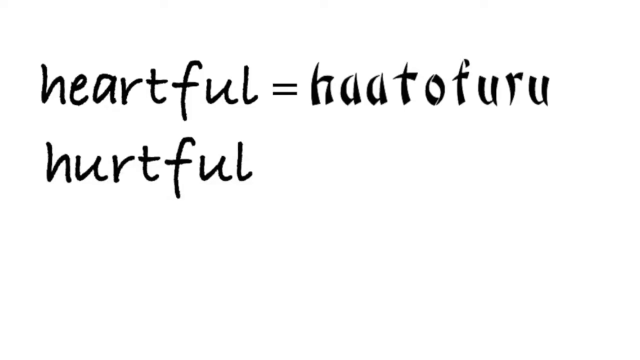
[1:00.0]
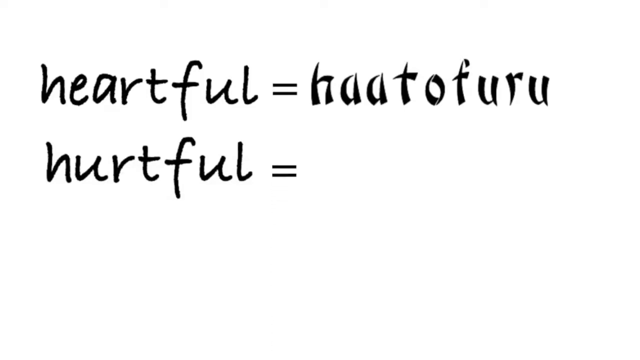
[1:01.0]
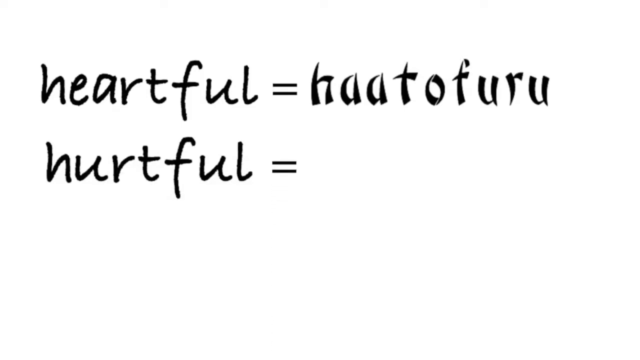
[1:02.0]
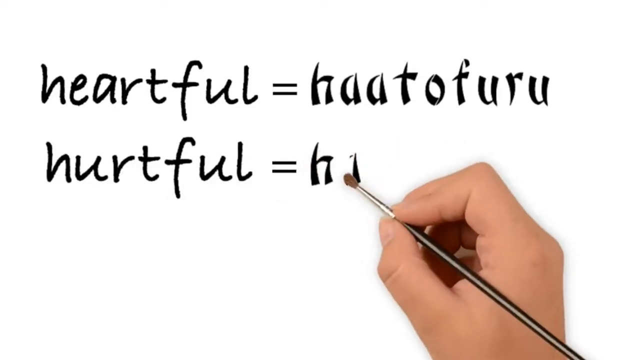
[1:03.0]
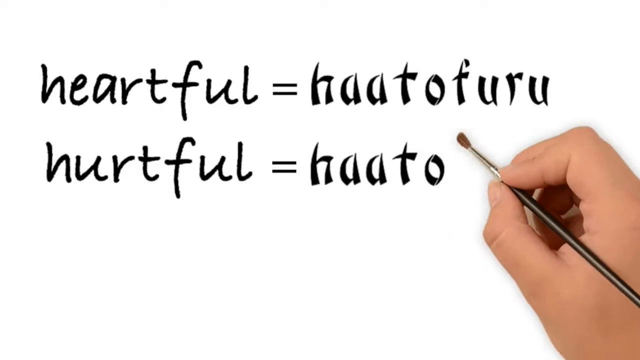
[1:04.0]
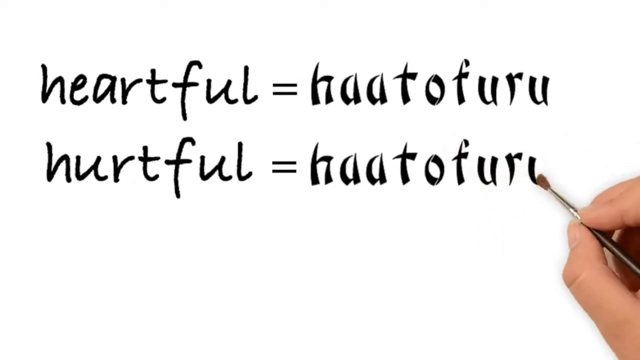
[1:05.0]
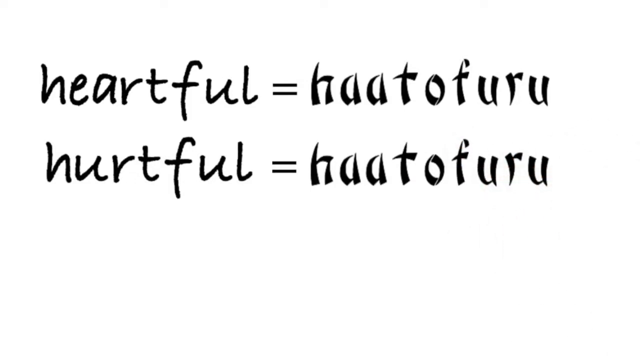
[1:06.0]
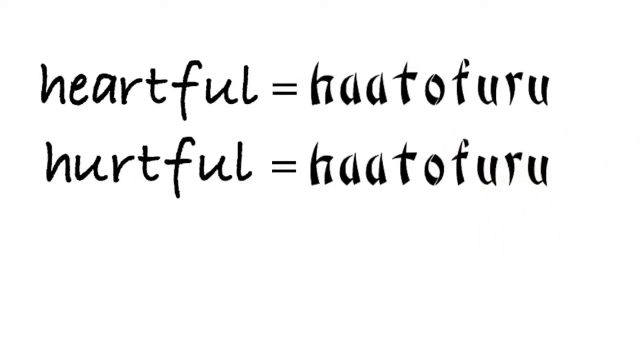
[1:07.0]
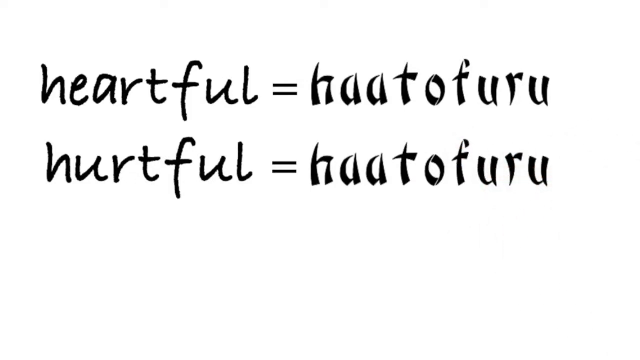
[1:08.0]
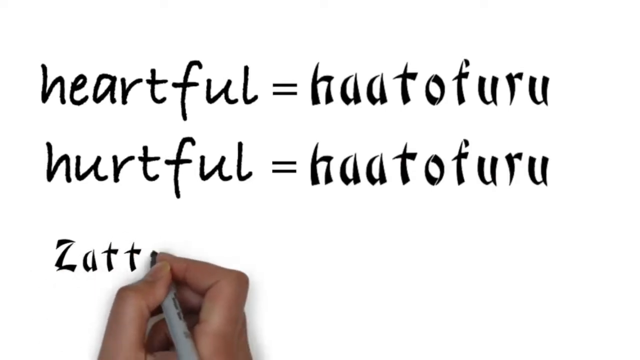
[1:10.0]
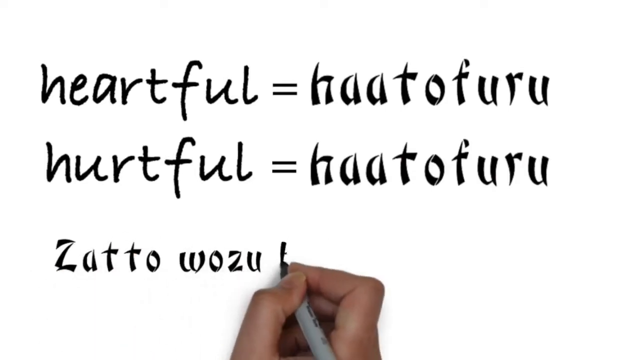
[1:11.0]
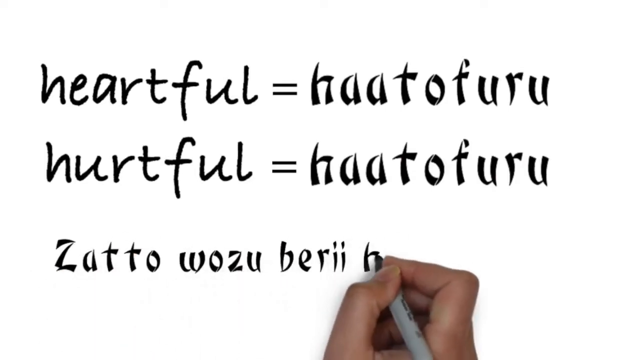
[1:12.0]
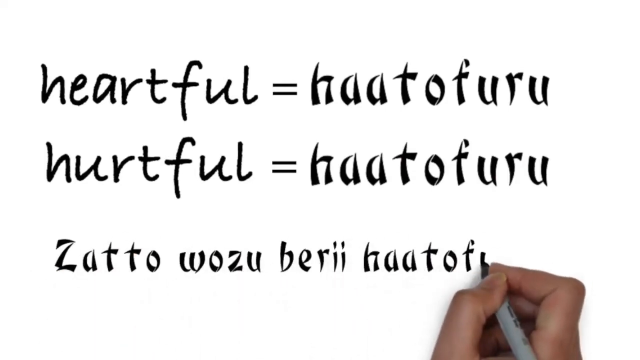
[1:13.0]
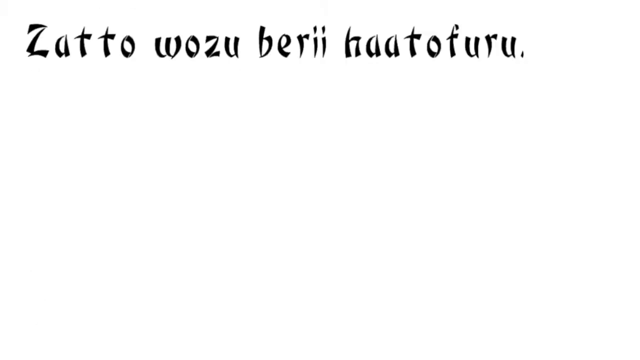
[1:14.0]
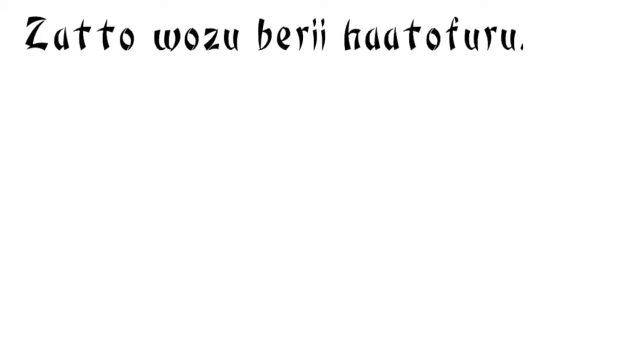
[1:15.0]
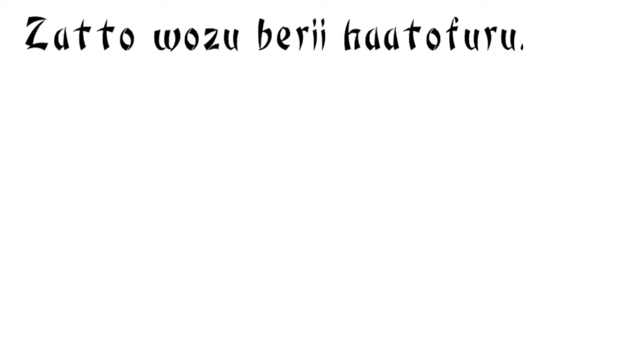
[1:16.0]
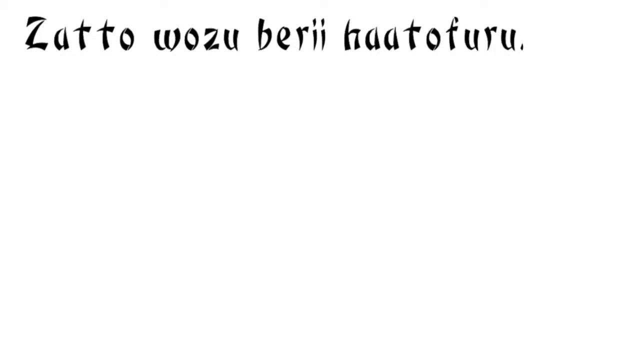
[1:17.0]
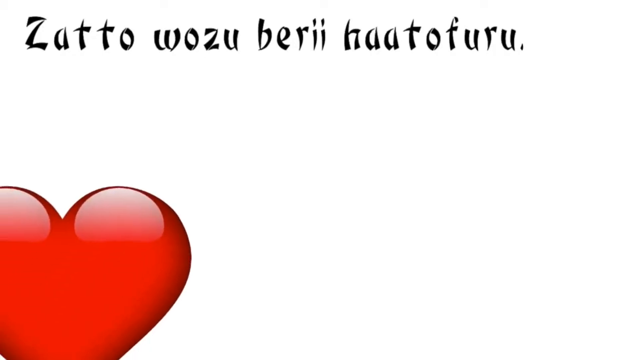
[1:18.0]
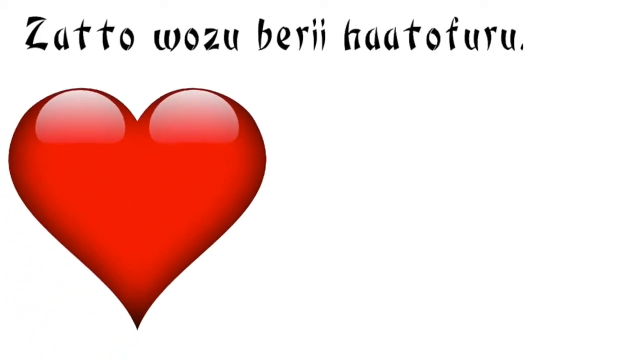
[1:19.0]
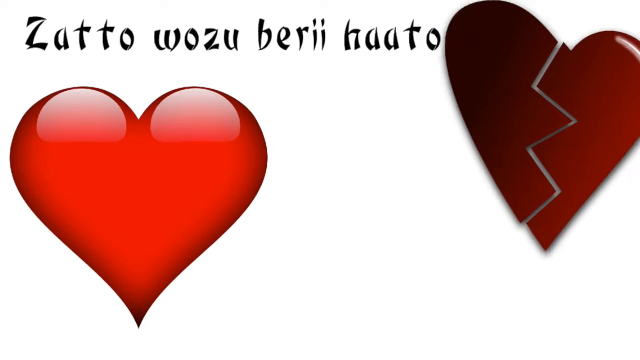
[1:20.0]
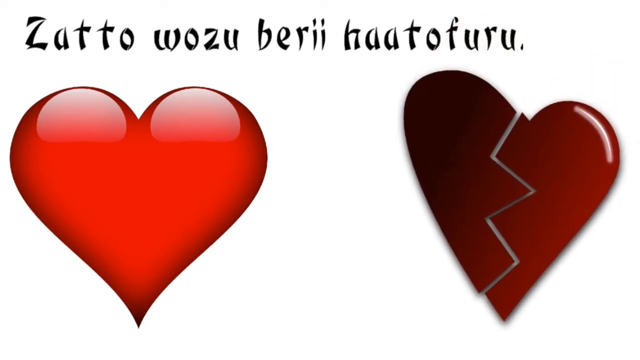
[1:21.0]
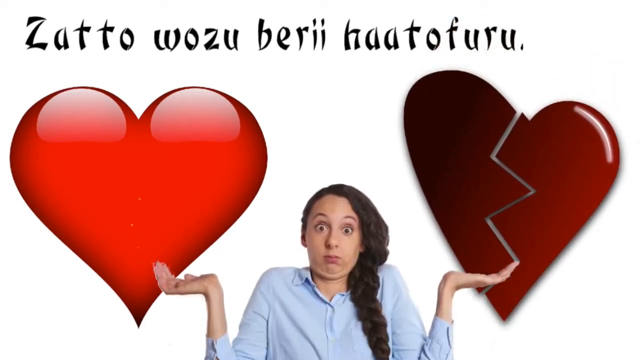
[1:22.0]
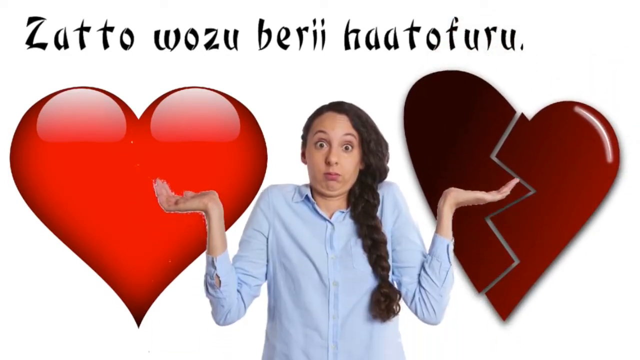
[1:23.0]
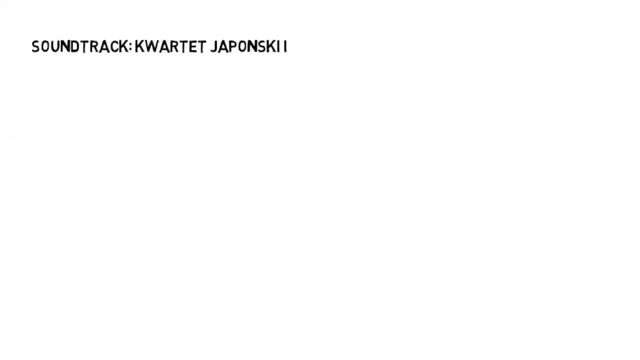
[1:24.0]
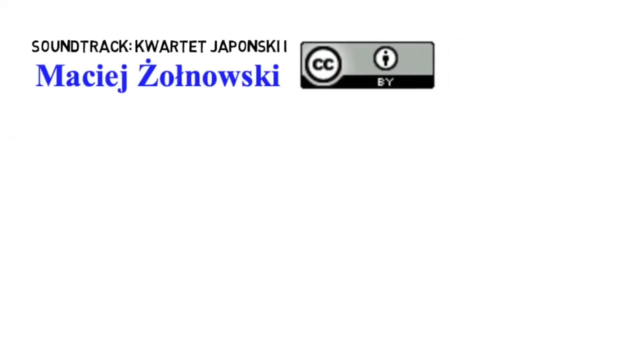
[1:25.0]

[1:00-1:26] A white screen has a gray bar across the bottom and a black bar across the bottom of the screen.